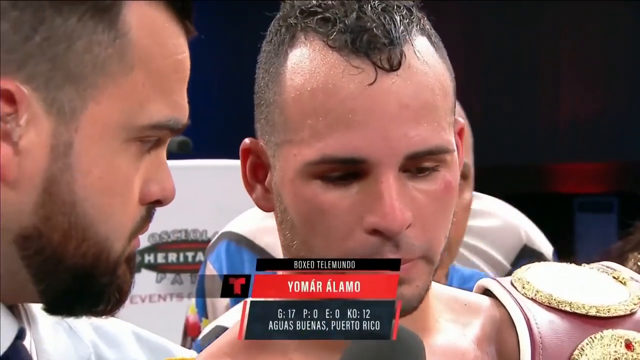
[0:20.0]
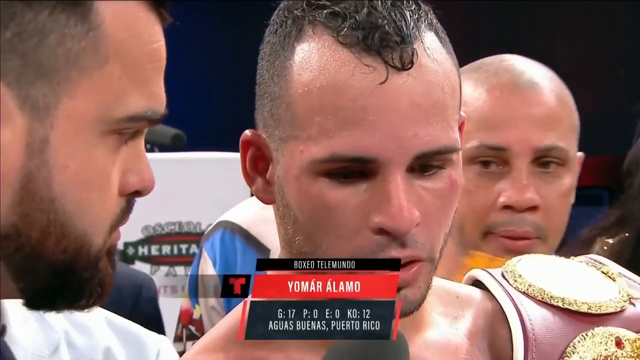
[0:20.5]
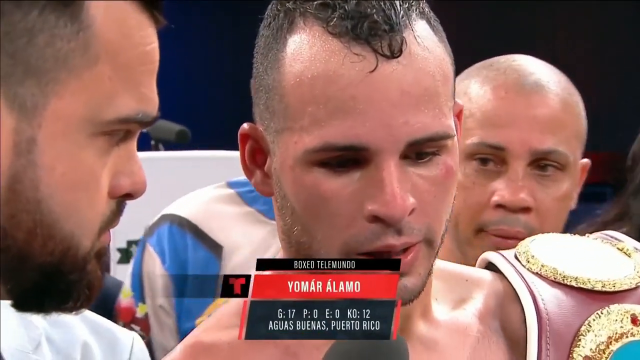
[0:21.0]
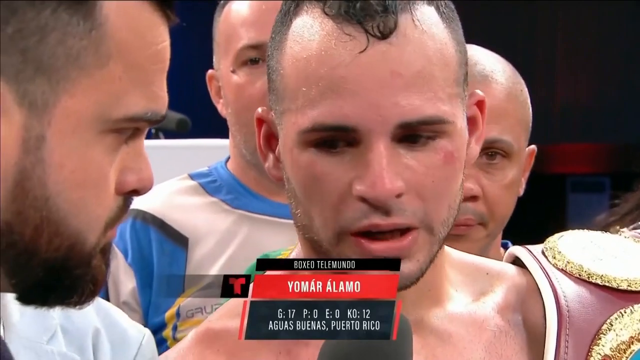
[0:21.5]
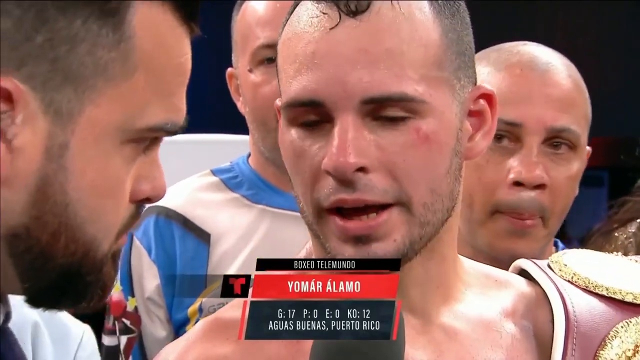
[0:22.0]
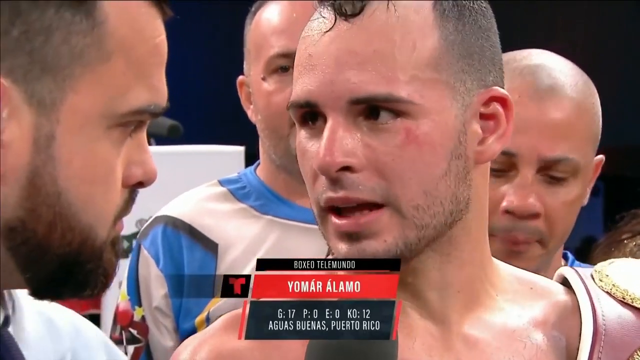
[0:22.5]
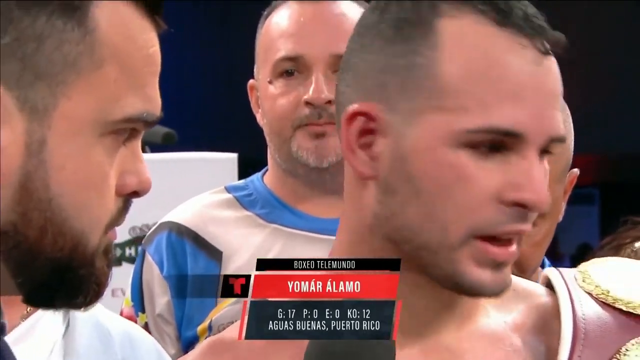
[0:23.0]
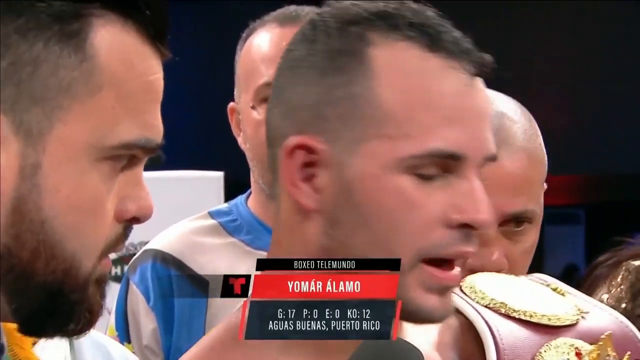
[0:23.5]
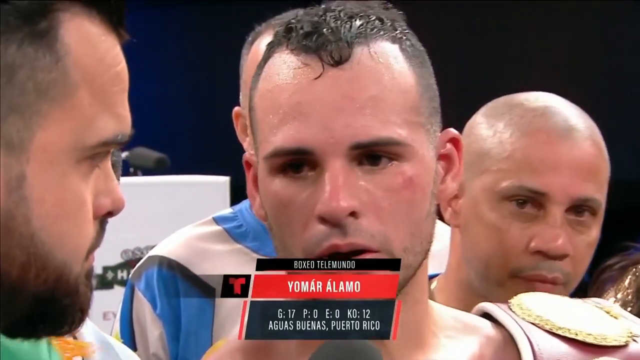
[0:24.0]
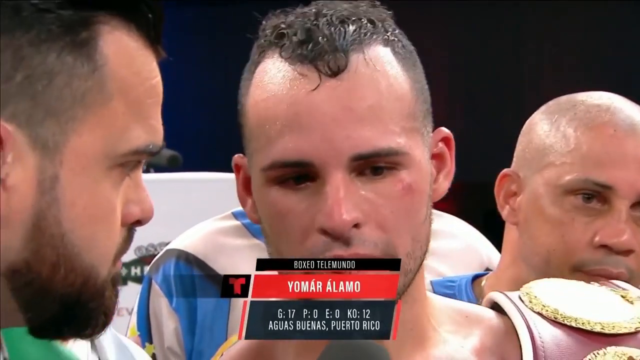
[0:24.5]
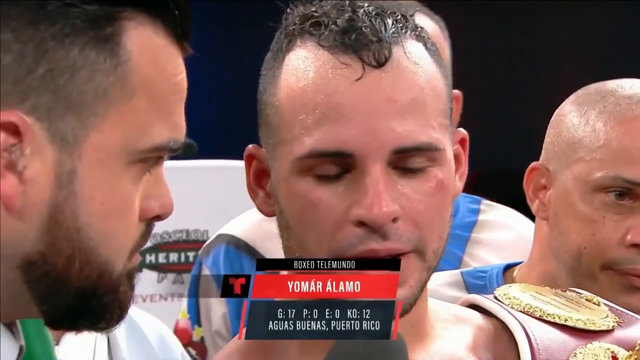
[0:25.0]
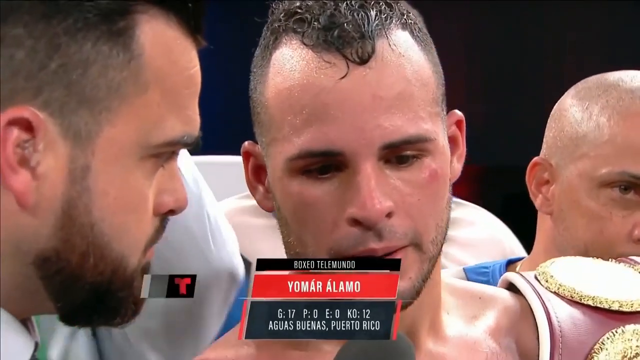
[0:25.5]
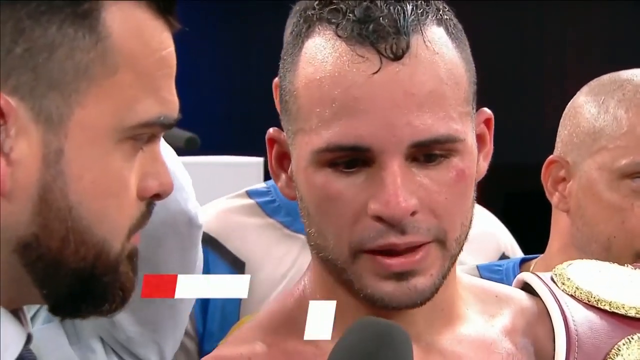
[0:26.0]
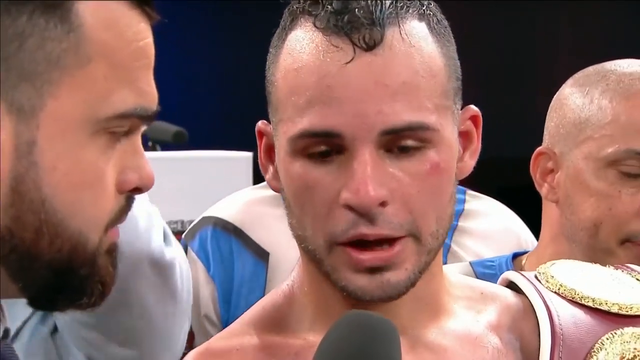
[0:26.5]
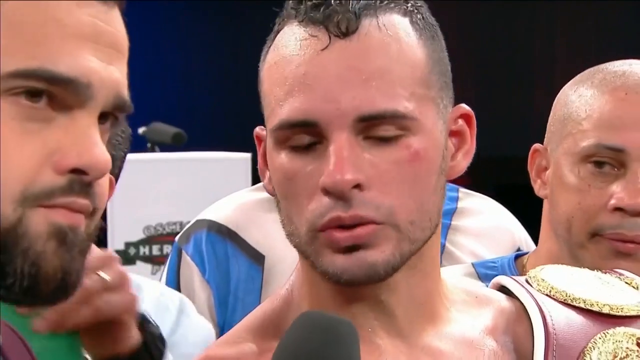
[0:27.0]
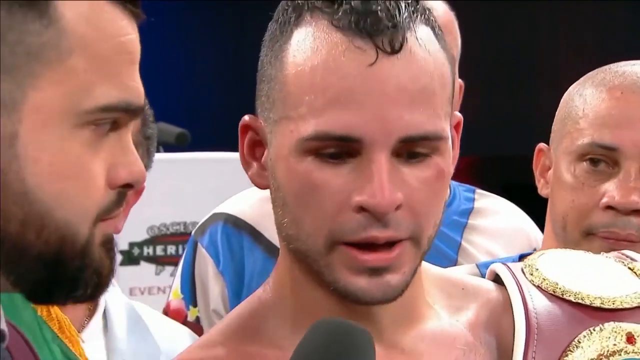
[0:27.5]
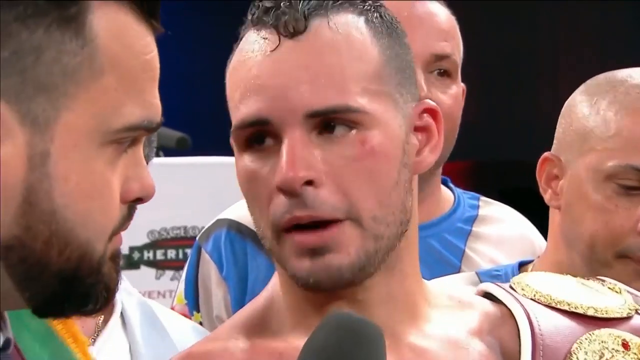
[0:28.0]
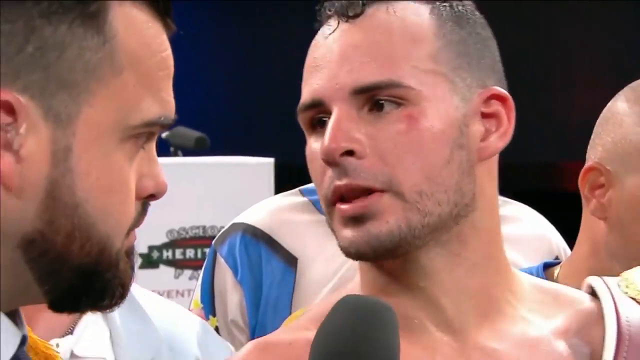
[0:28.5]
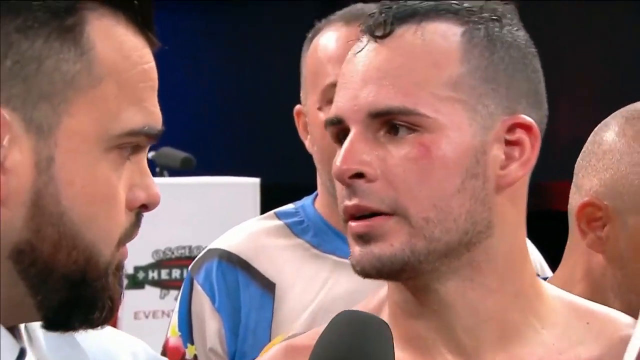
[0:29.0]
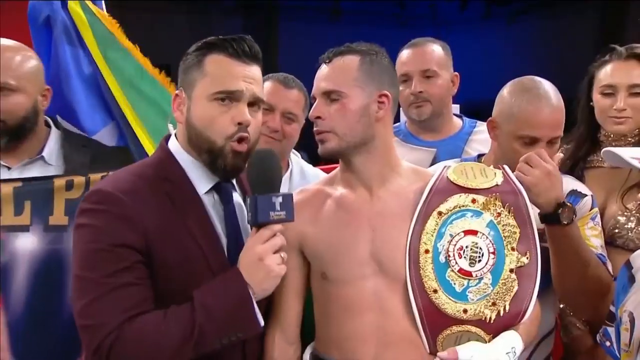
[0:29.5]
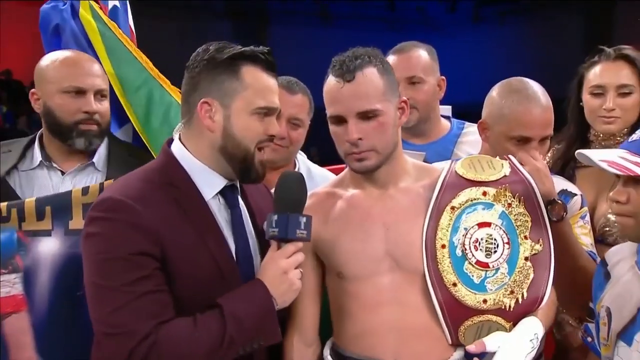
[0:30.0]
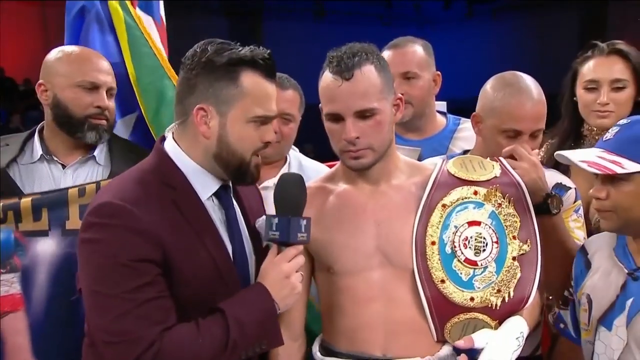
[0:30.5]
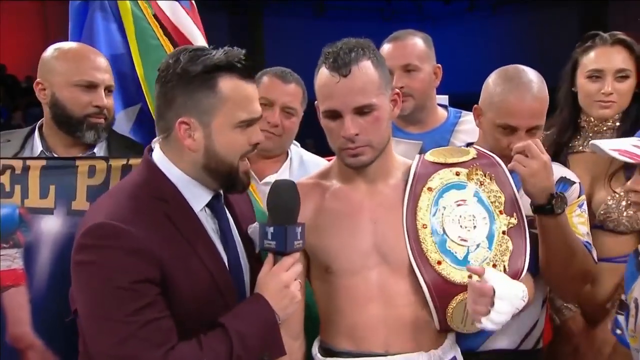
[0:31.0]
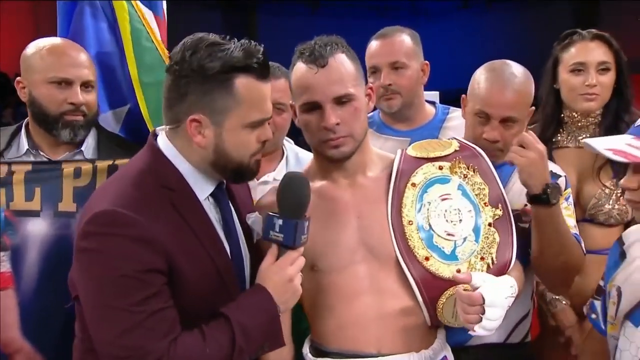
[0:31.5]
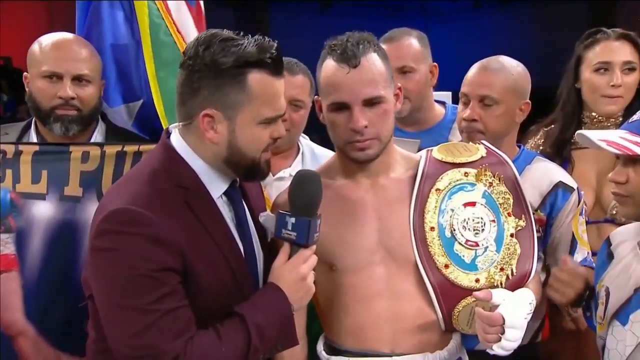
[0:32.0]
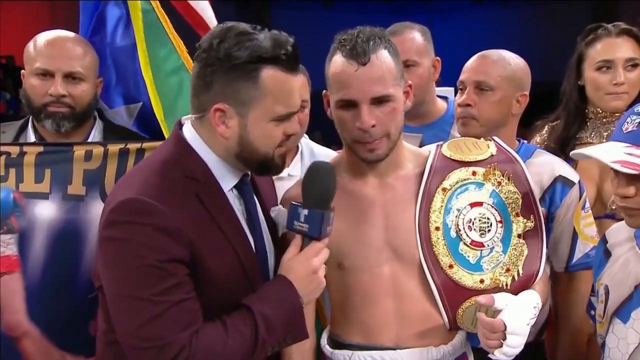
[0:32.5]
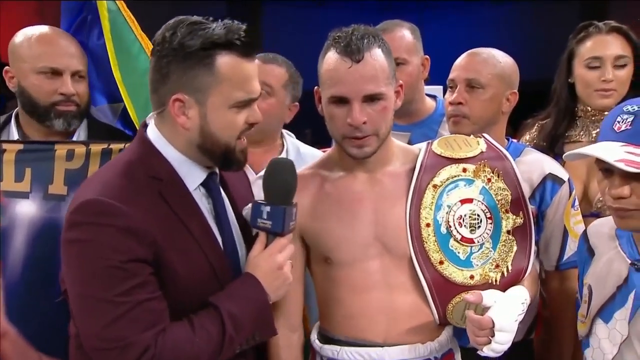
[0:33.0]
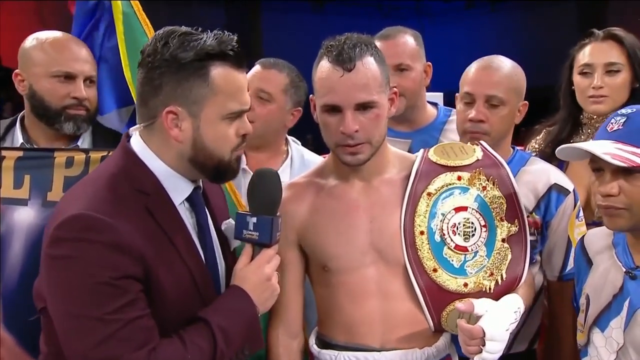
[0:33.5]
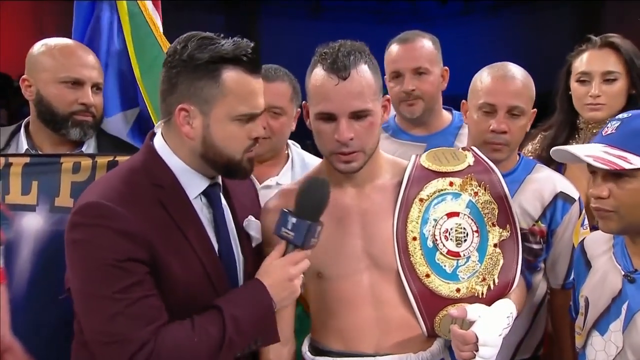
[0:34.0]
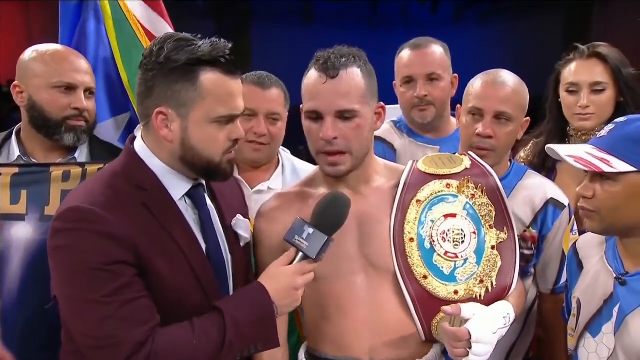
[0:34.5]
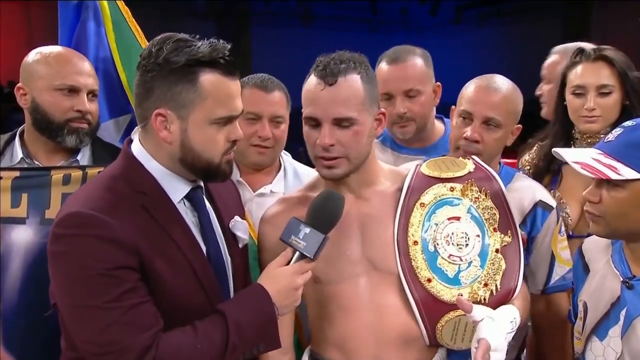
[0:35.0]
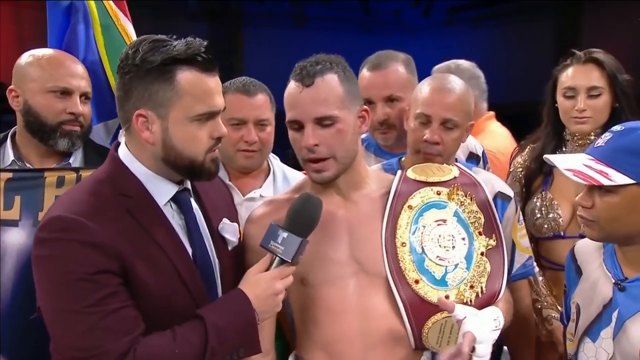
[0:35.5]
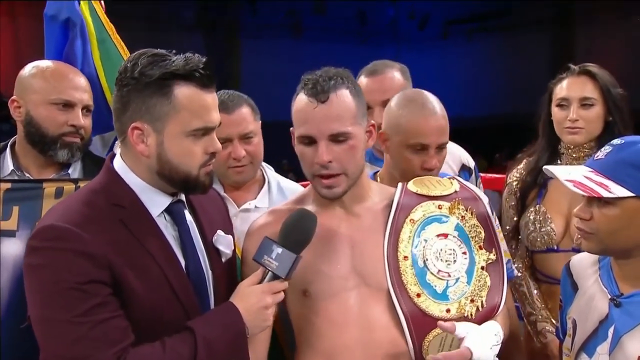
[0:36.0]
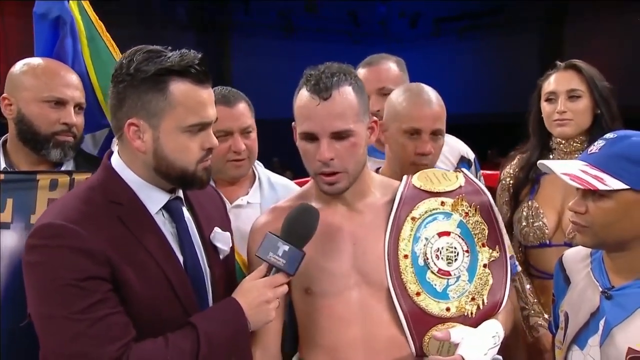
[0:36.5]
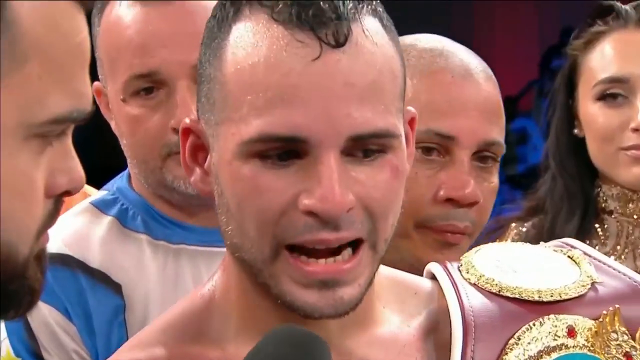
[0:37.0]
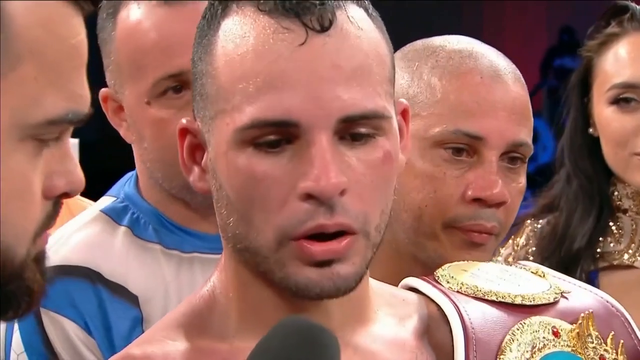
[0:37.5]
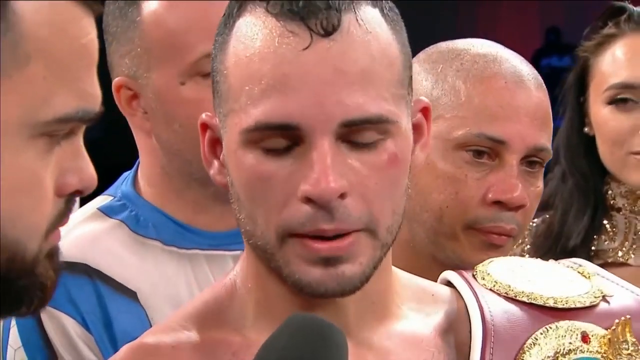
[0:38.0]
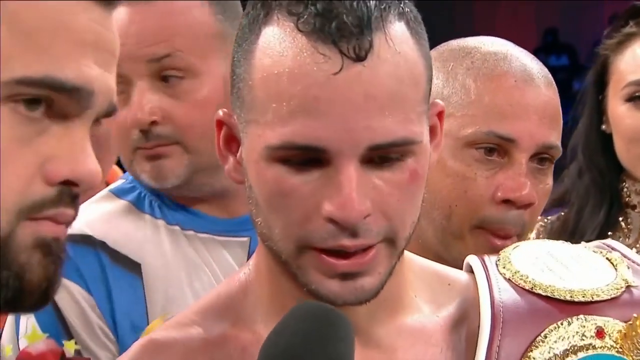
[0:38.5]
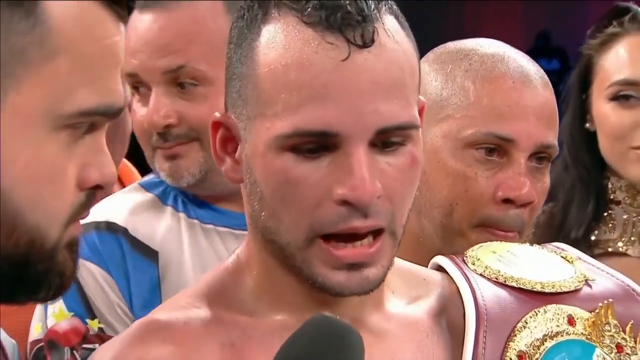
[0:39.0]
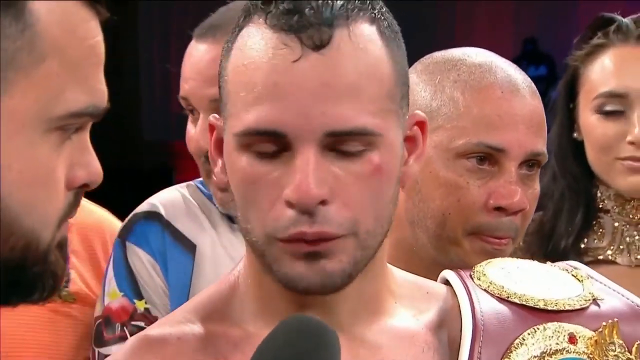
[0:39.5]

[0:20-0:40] Text appears at the bottom center of the screen: a thin black horizontal line with white text reading "boxeo telemundo", below it a red horizontal bar with white lettering reading "yoma alamo", and below that a slightly deeper horizontal bar with the text "g 17 p 0 e 0 k o 12" and beneath it "aguas buenos puerto rico". On the left of the screen, facing into the middle, is the bearded interviewer, now with only his face visible. In the center the boxer is being interviewed, the belt over his left shoulder. Behind him, over his left shoulder, is a bald man with a blue collar and a white top who seems to be part of his entourage, and another individual stands behind him in the same blue and white outfit. The view then widens to a more panoramic shot of the people in the ring. A bearded, bald-headed man is to the left of the interviewer in the burgundy jacket. On the far right is the young woman, and in the foreground in front of her is a young man in a blue baseball cap with a white peak and red decoration on it.